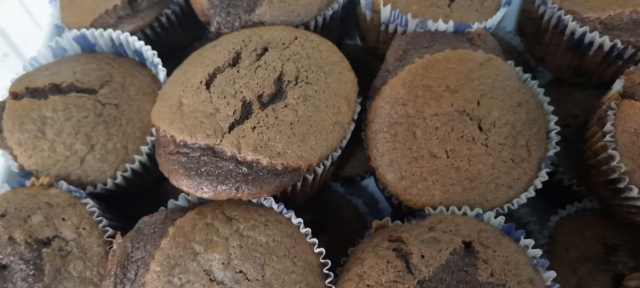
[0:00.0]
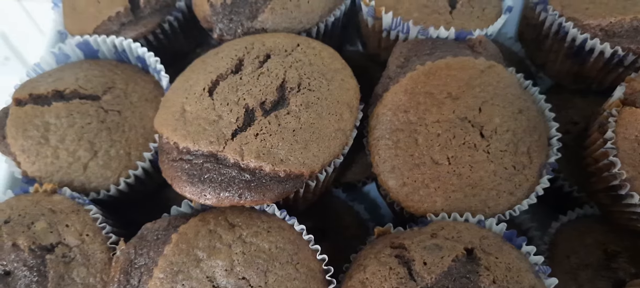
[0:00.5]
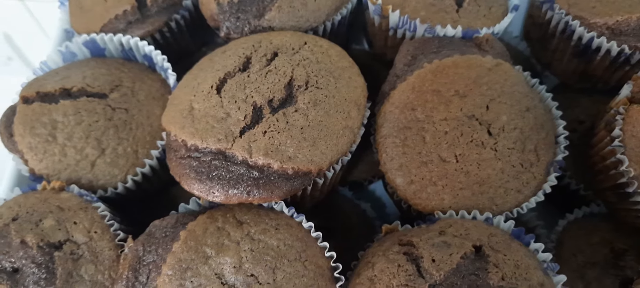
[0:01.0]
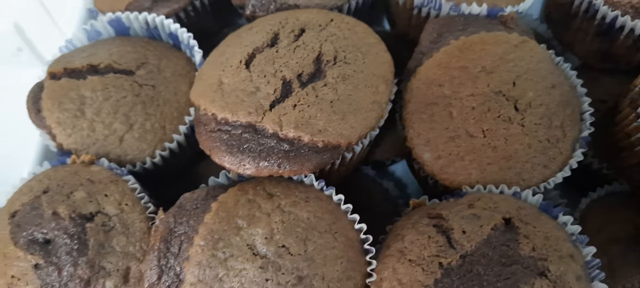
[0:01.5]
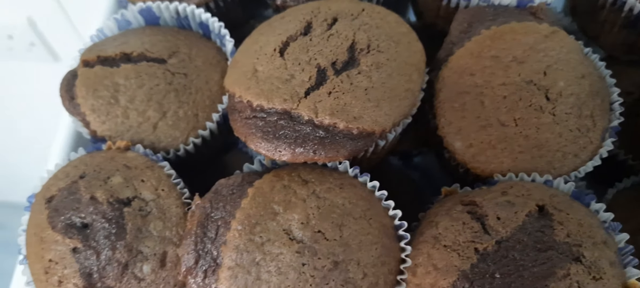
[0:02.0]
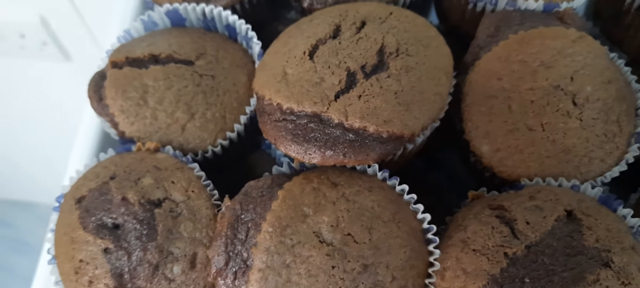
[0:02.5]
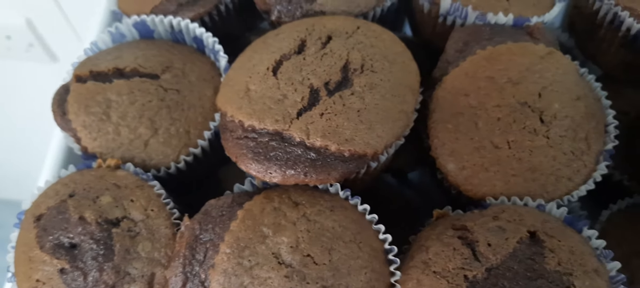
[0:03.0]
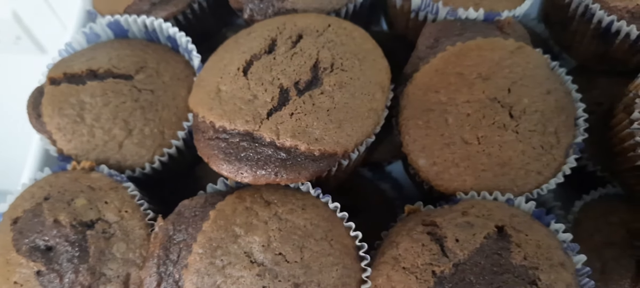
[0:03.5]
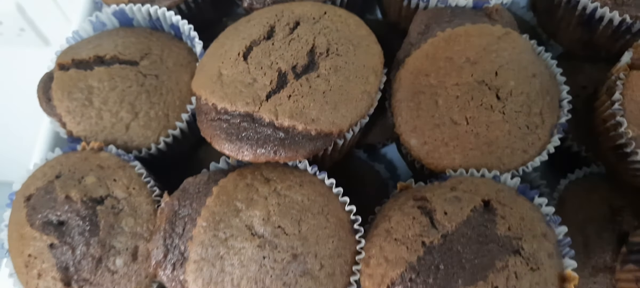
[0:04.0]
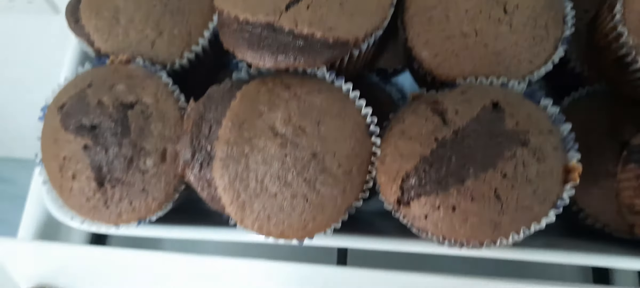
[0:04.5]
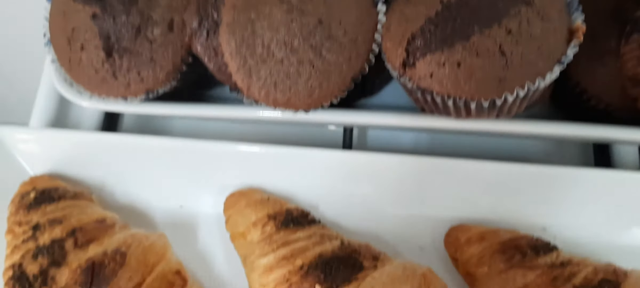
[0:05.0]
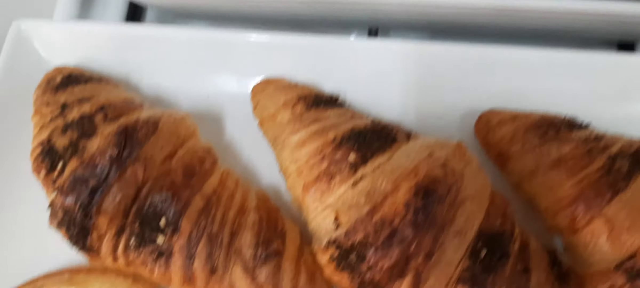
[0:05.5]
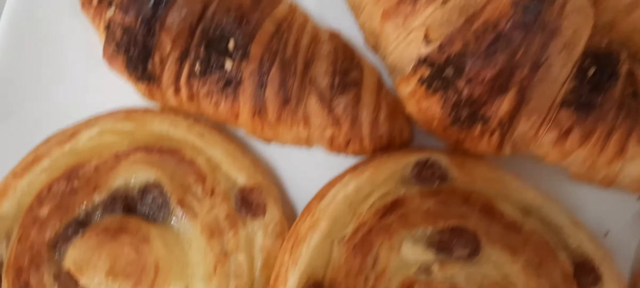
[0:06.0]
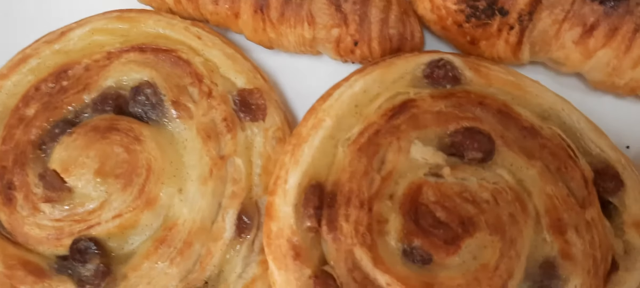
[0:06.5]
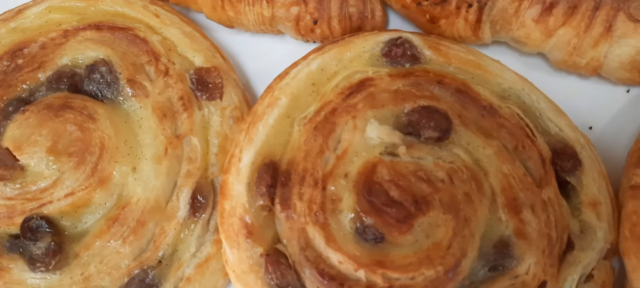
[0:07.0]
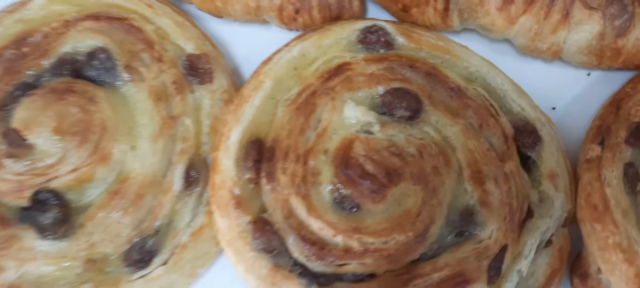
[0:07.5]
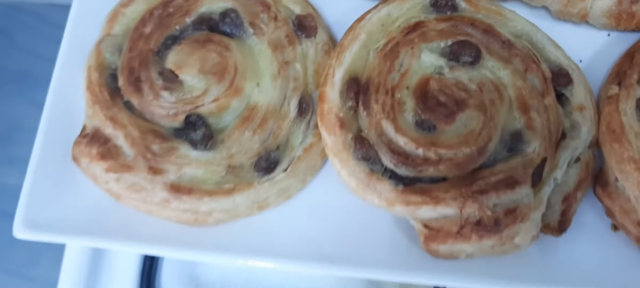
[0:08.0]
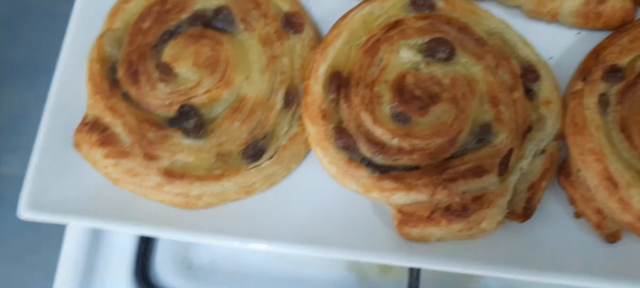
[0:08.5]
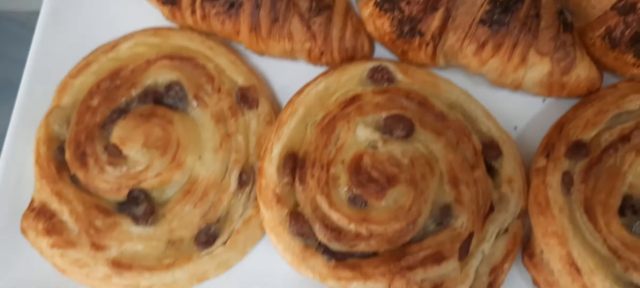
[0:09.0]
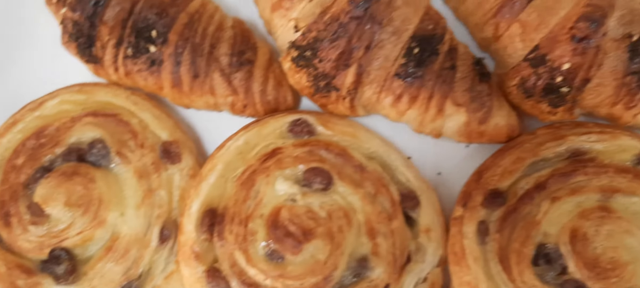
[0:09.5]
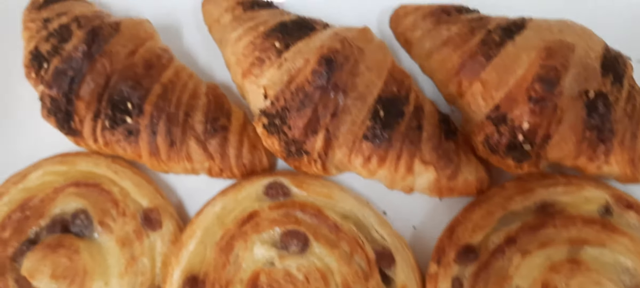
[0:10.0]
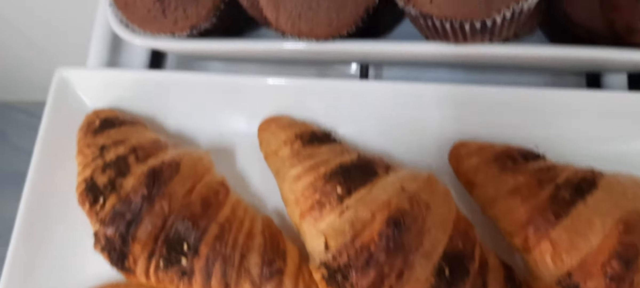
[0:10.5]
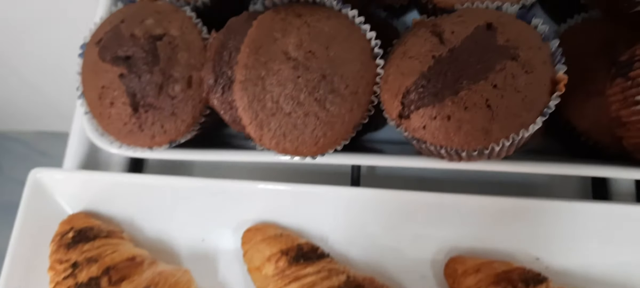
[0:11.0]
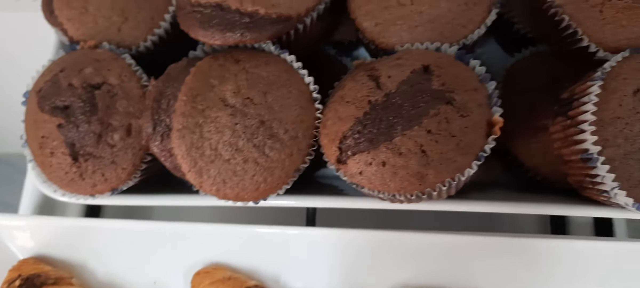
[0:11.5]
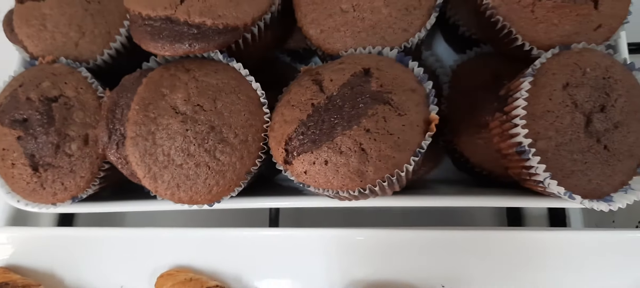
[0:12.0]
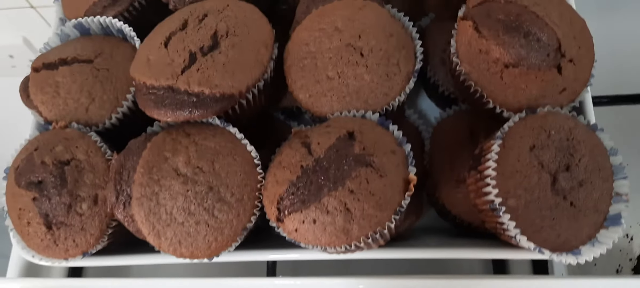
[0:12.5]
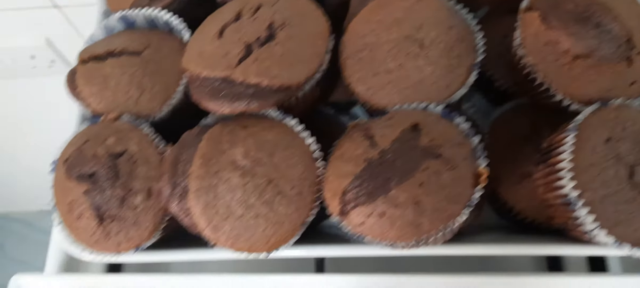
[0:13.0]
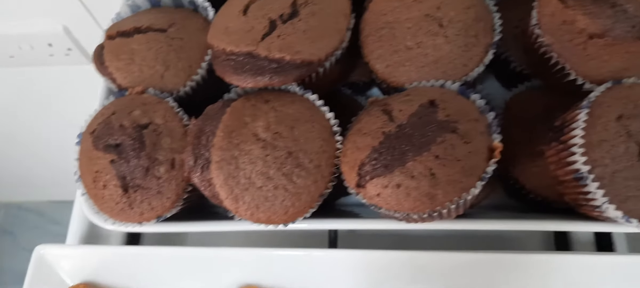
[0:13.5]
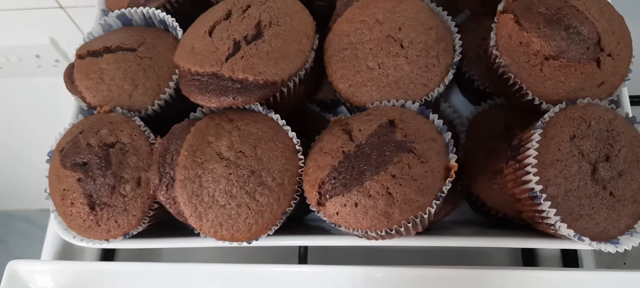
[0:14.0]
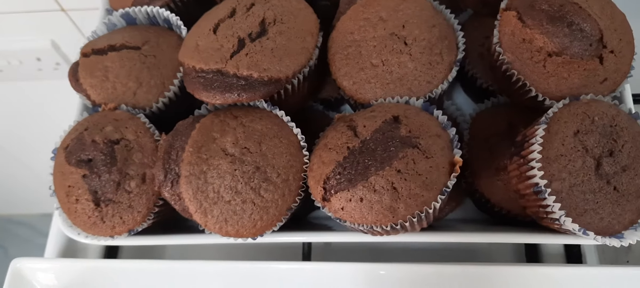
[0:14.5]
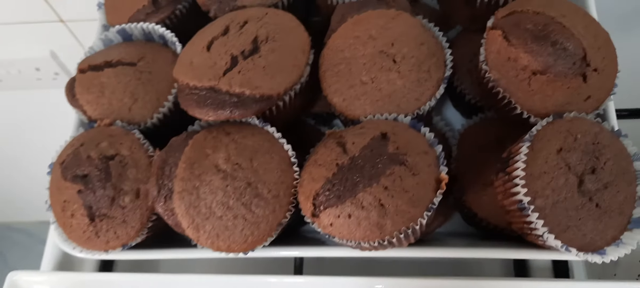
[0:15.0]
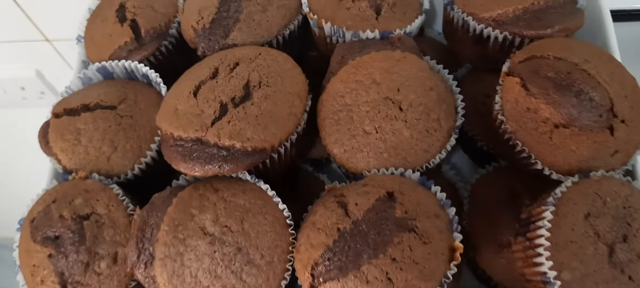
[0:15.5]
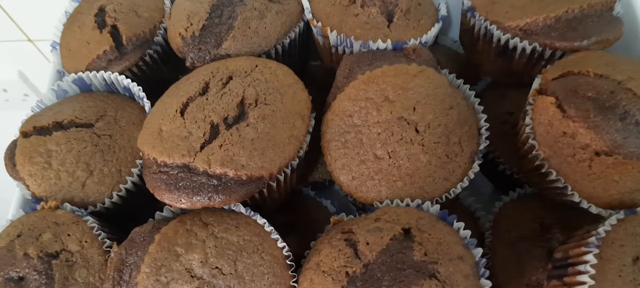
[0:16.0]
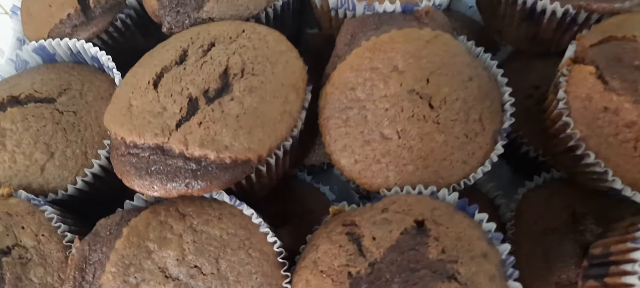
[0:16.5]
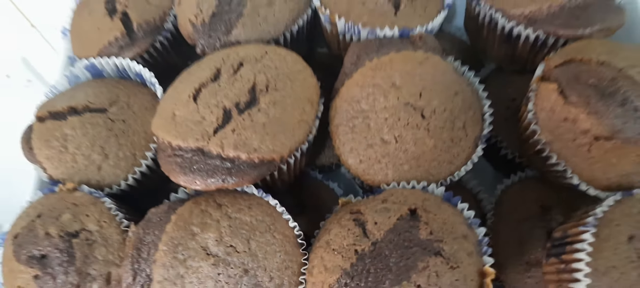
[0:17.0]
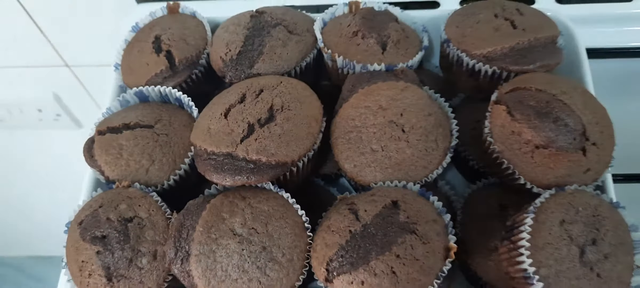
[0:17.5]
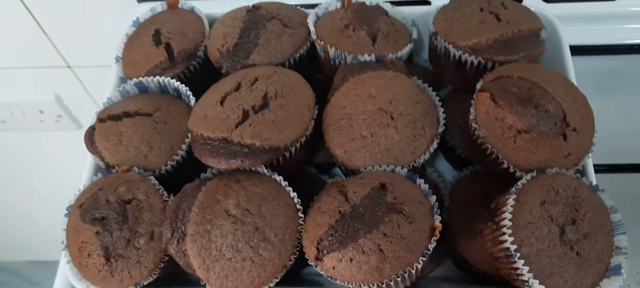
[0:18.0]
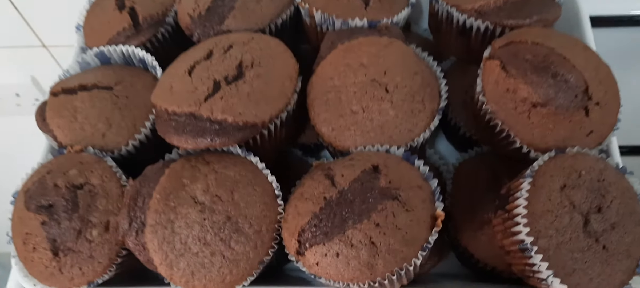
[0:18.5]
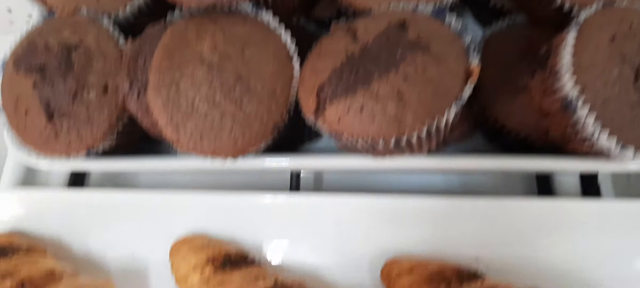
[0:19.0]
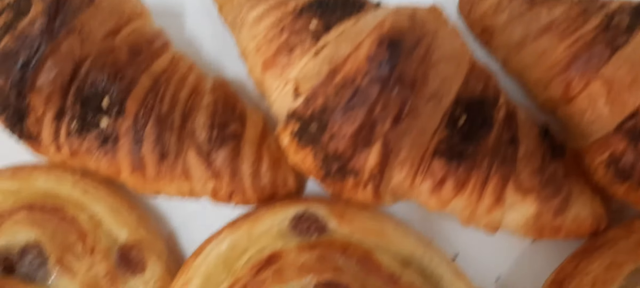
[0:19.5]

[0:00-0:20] A white tray holds three or four rows of brown muffins that look like chocolate muffins. The view scrolls down to a close-up of another white platter, with croissants at the top and sticky buns underneath; both the croissants and the sticky buns are dark brown and light brown. The person with the camera pans up and shows the chocolate muffins in their muffin cups, all shot very close up. The muffin cups are white with lines of different colors, which look to be purple and orange, and only the tops of the cups are visible. He then scrolls down and shows a close-up of the croissants and the sticky buns again.